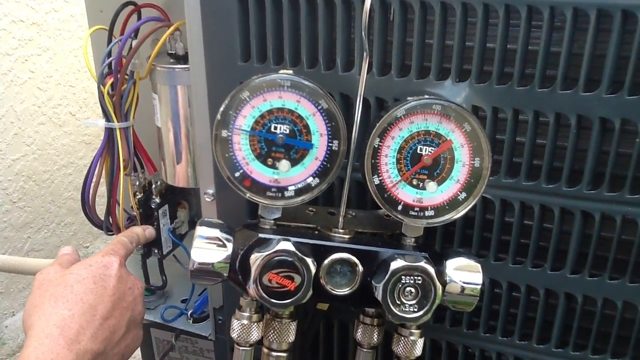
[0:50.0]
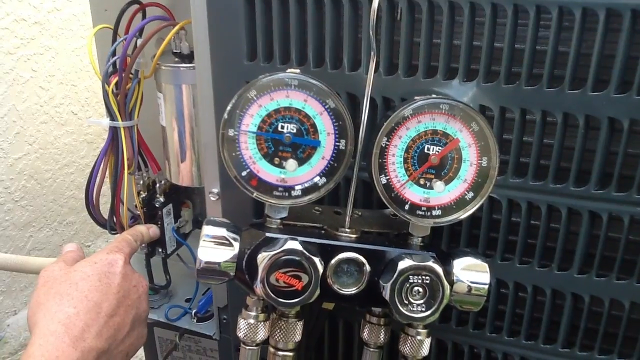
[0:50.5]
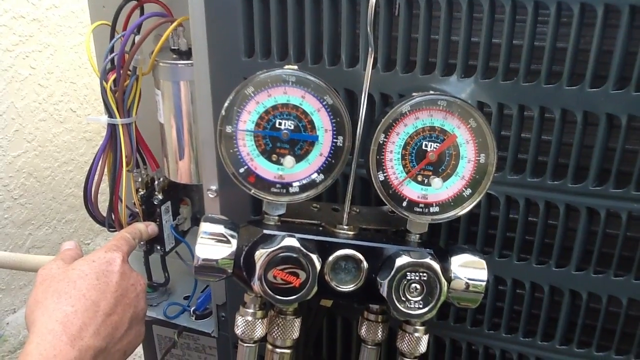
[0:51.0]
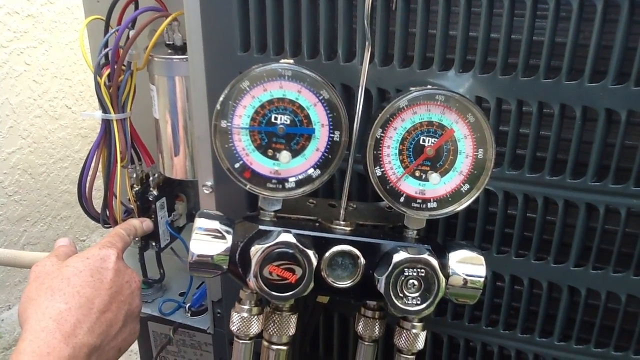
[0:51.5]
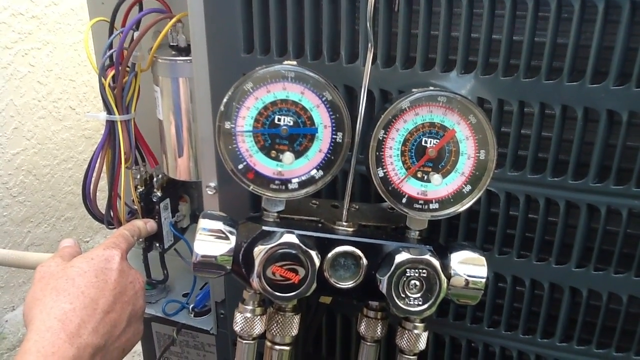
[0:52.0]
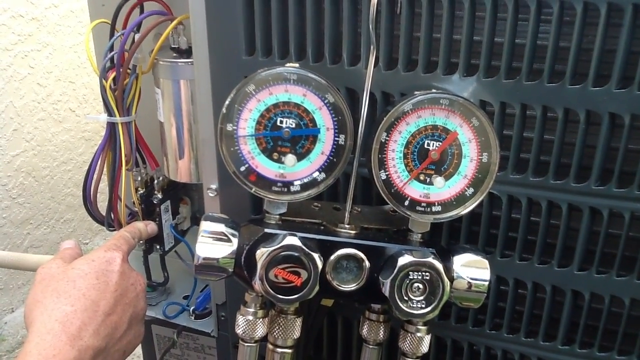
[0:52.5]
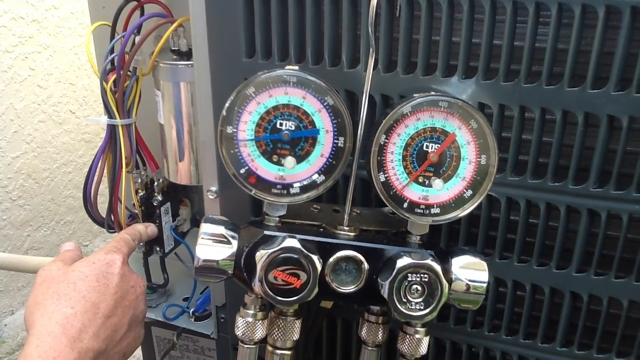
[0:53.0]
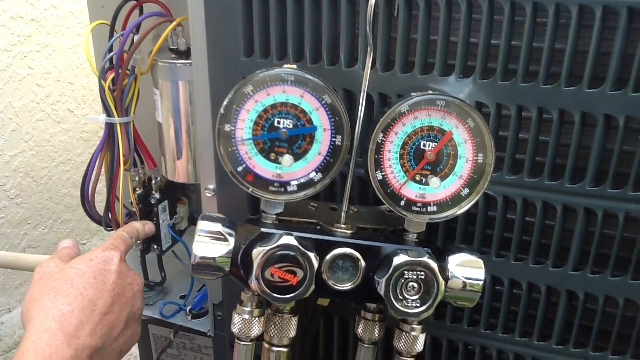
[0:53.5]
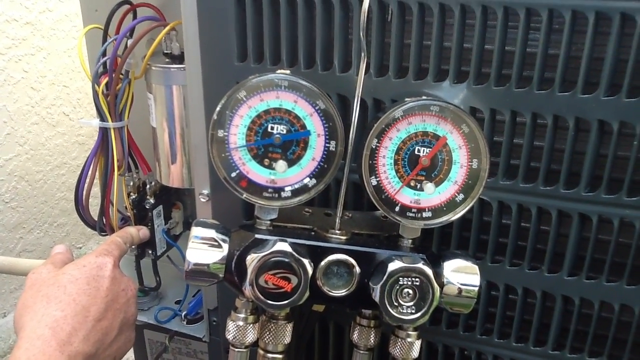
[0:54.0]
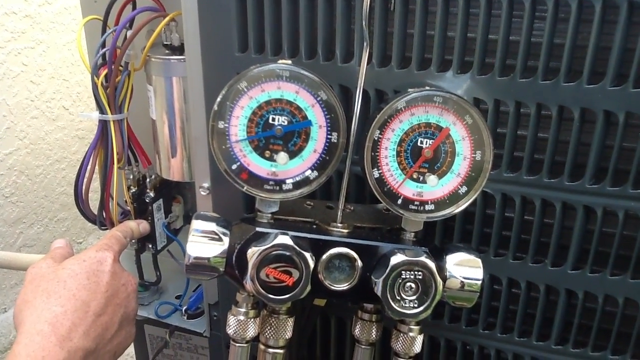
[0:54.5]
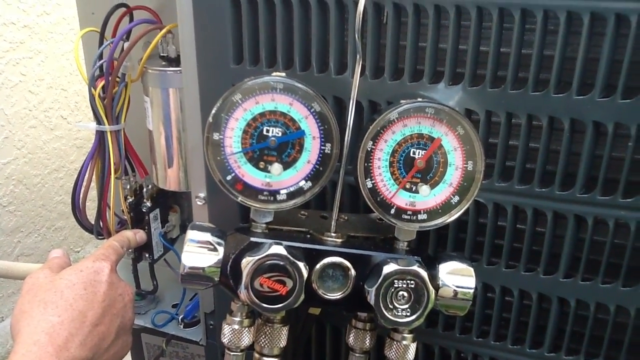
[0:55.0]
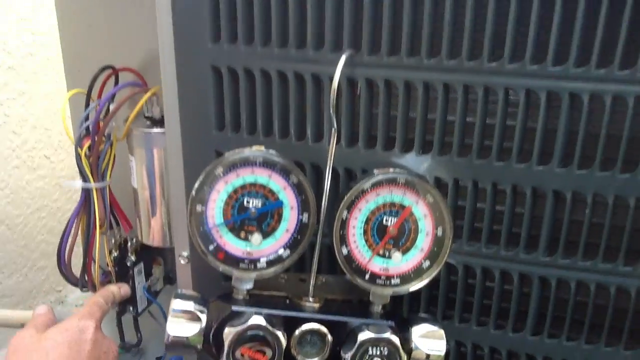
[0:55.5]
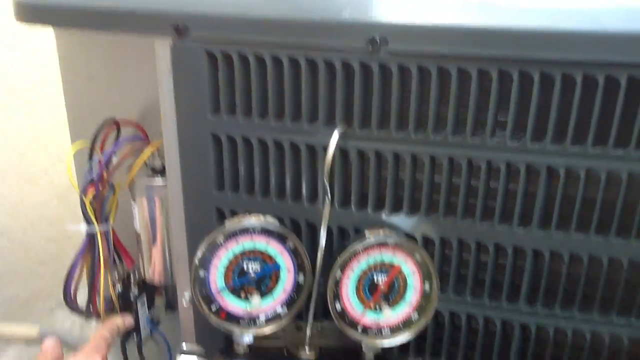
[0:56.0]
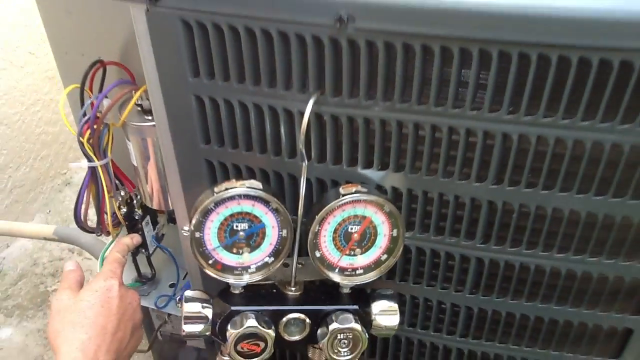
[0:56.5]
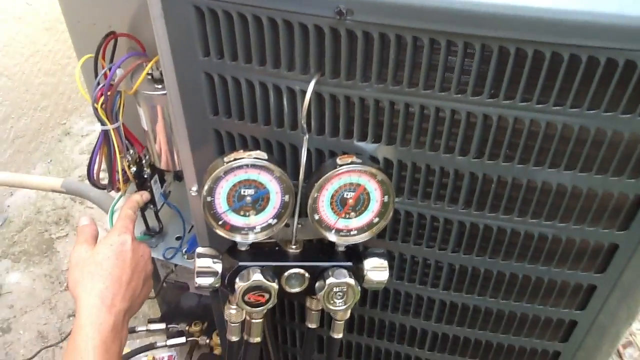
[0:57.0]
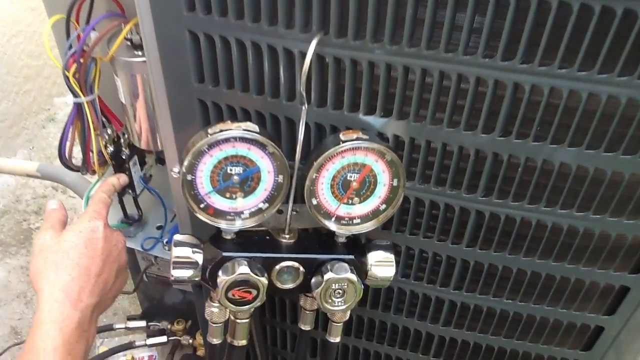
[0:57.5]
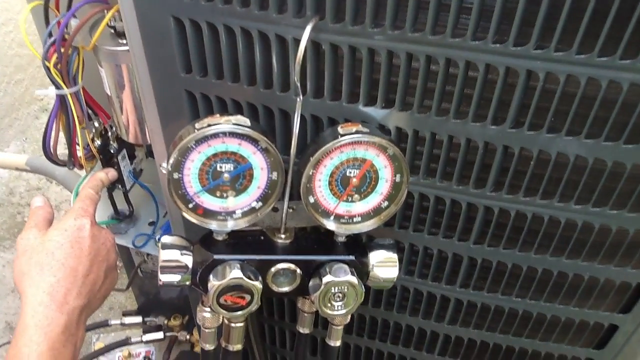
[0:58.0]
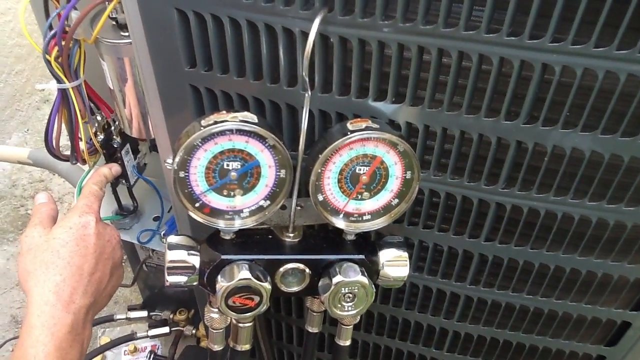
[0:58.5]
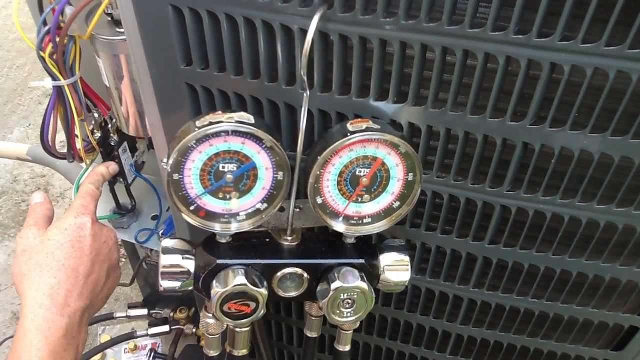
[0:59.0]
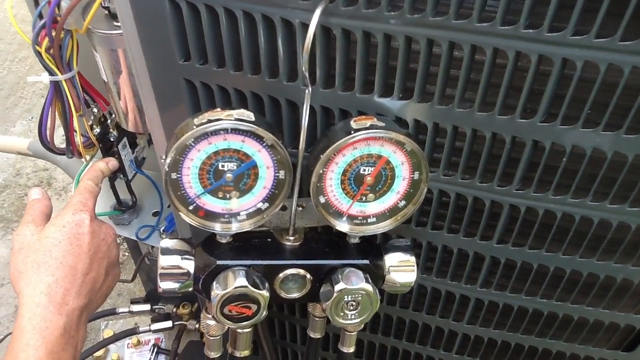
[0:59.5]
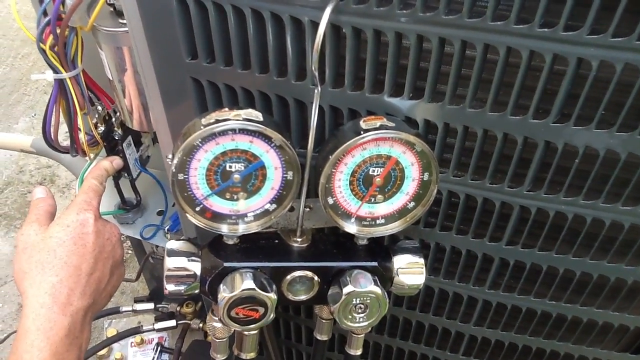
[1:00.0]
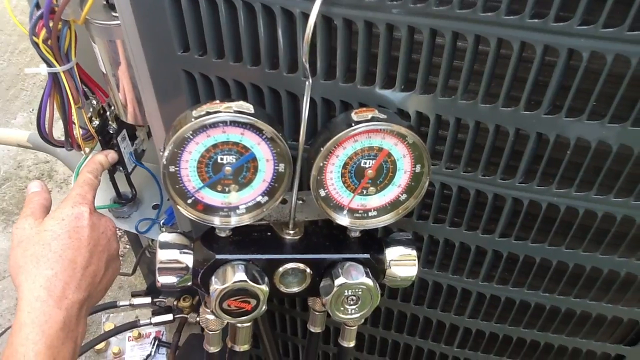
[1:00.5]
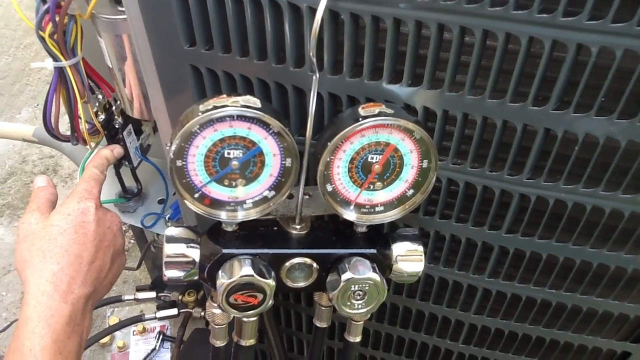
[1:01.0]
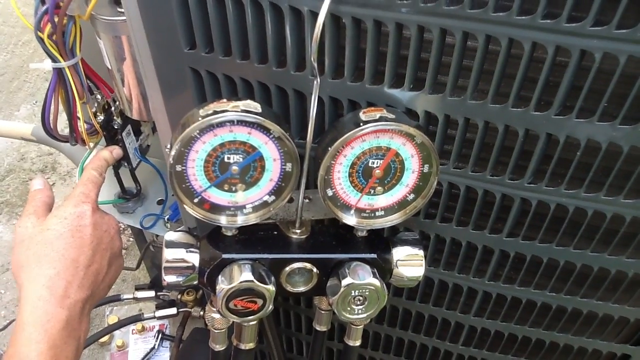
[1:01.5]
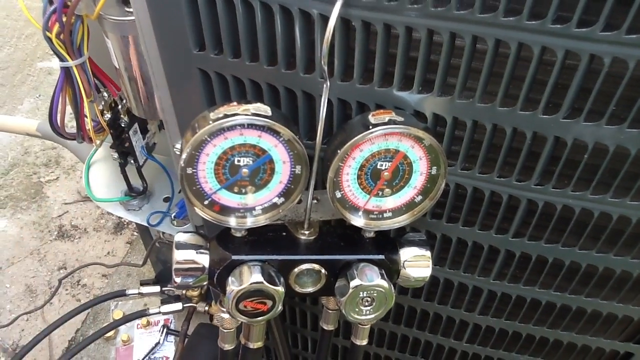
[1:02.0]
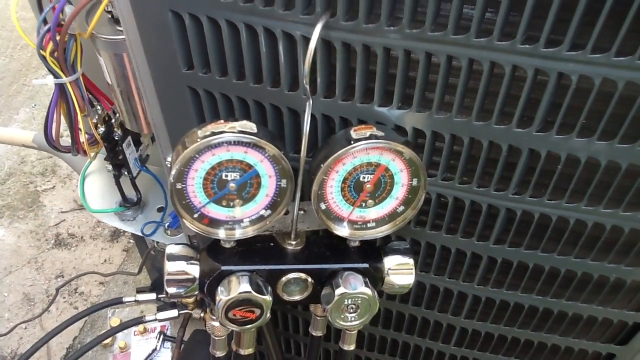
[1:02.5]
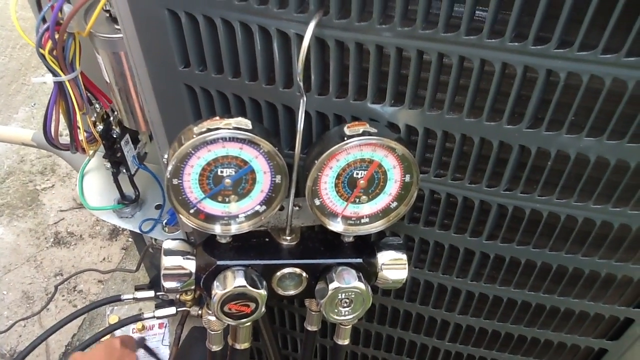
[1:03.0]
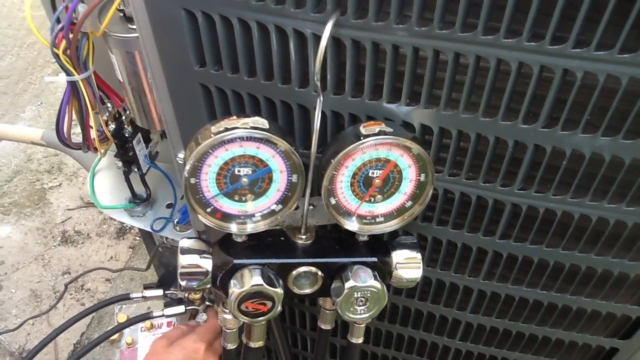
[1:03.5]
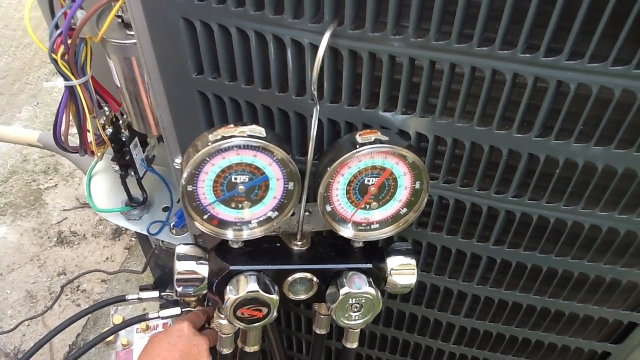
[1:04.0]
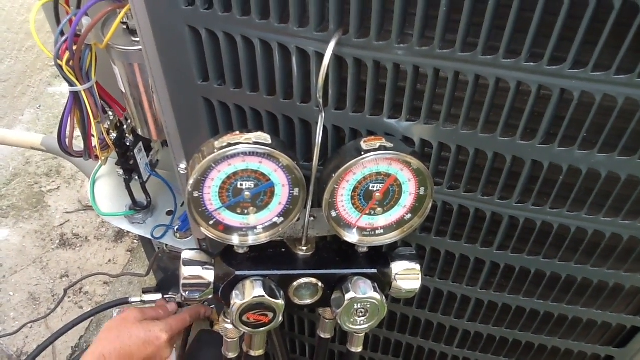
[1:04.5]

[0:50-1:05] The side of an HVAC unit is shown, with wires and things in the upper left and some buttons. The cover looks like it has been taken off, so the inside is visible, and a man's right hand pushes on a button inside near those wires. On a hanger is a gas gauge with two round circular dials that show how much air or gas is going into the machine. Tight wire tubes at its bottom have knobs for turning the gas on and off, and black tubes at the bottom of the gauge, which is hooked on the side, apparently run from the gauges into the machine at the bottom. The view then shows the man taking his finger off the handle and tightening some other knob or screw.